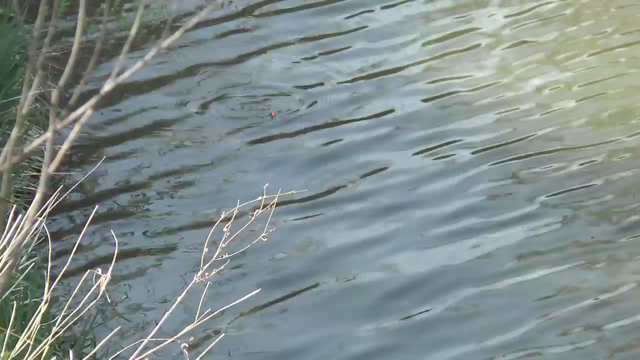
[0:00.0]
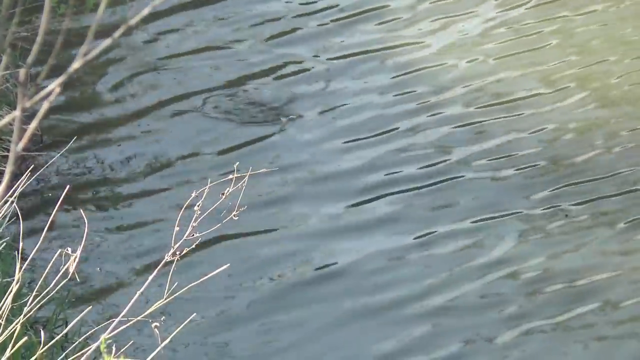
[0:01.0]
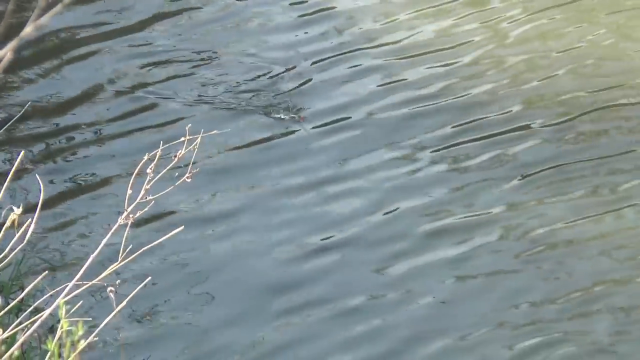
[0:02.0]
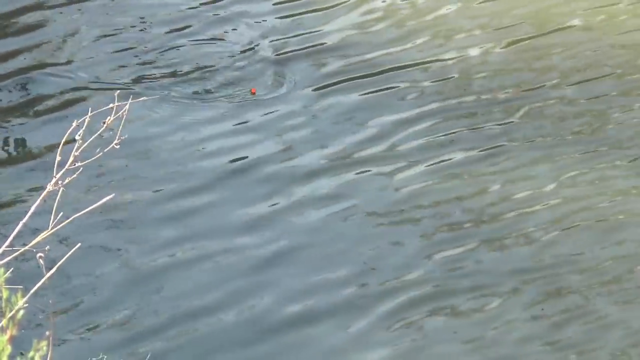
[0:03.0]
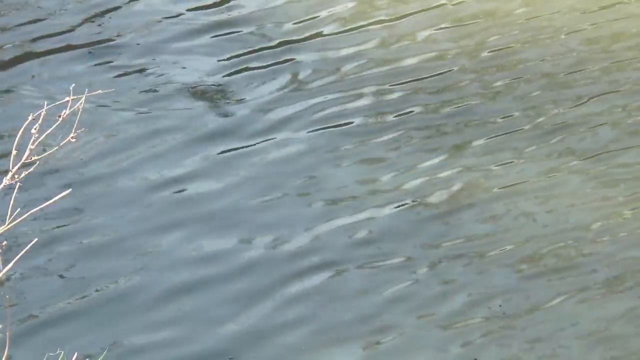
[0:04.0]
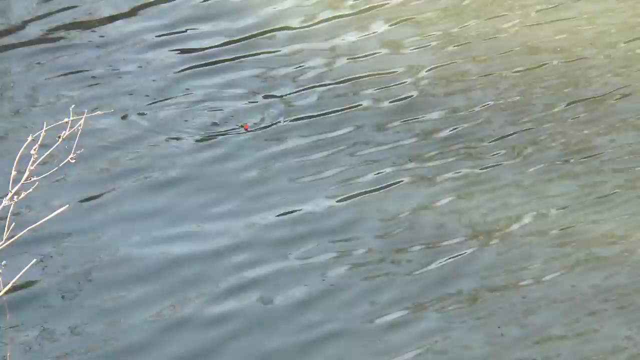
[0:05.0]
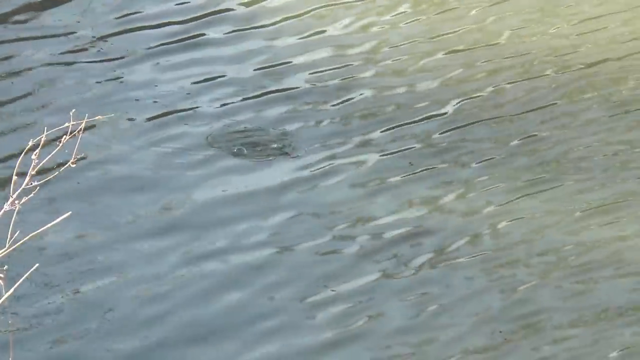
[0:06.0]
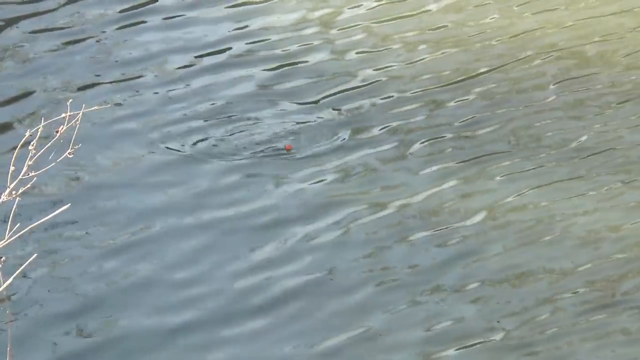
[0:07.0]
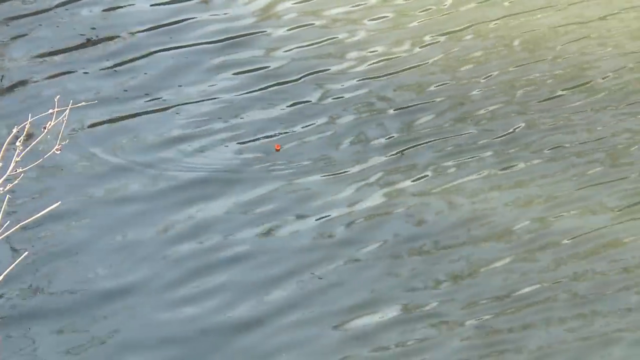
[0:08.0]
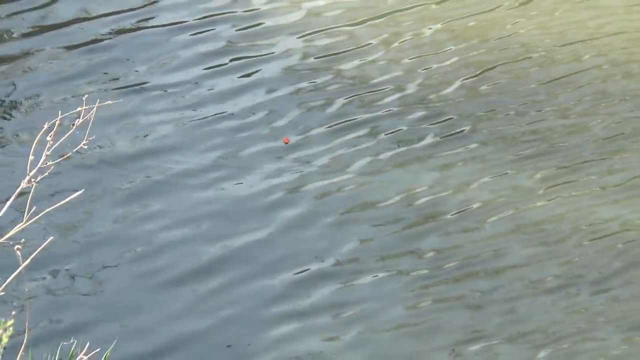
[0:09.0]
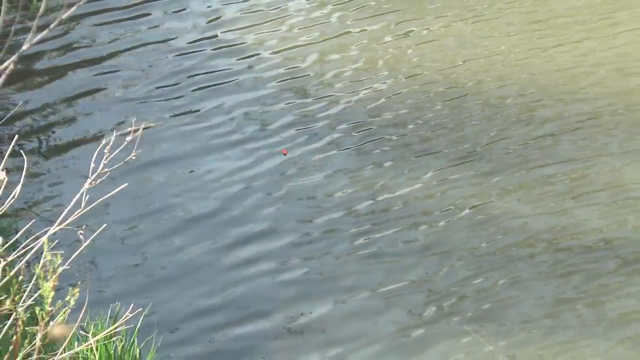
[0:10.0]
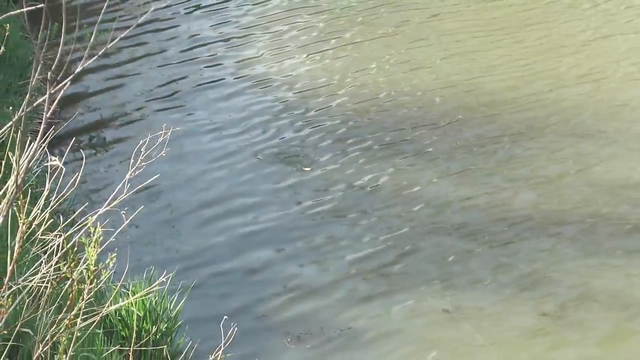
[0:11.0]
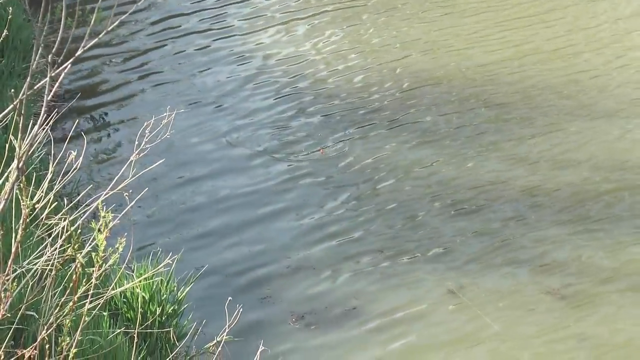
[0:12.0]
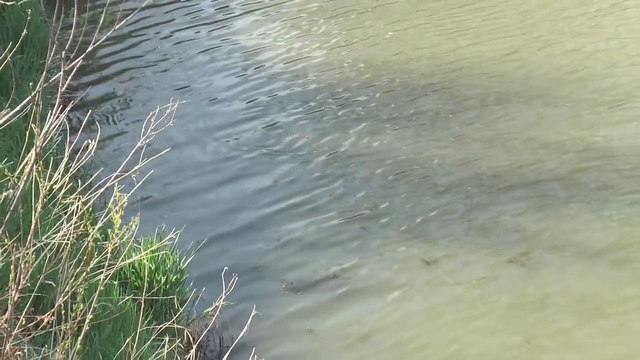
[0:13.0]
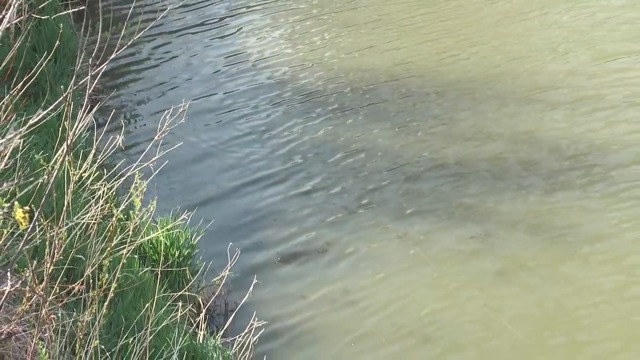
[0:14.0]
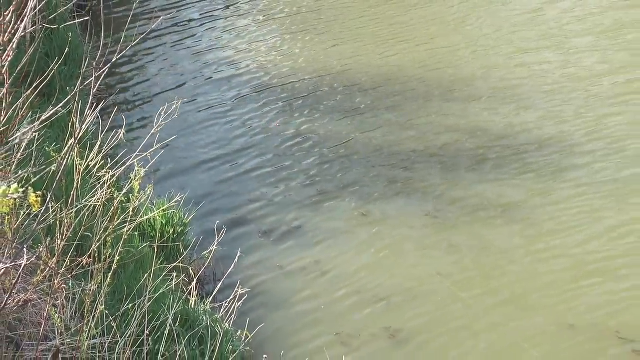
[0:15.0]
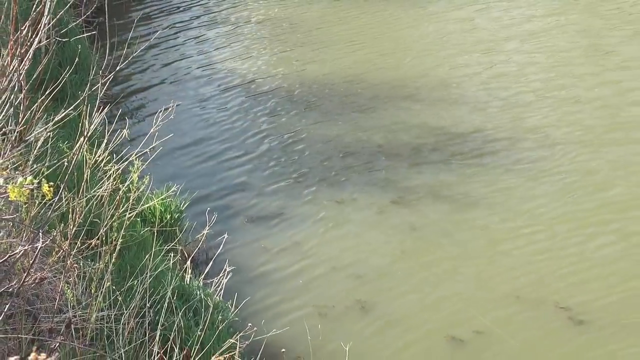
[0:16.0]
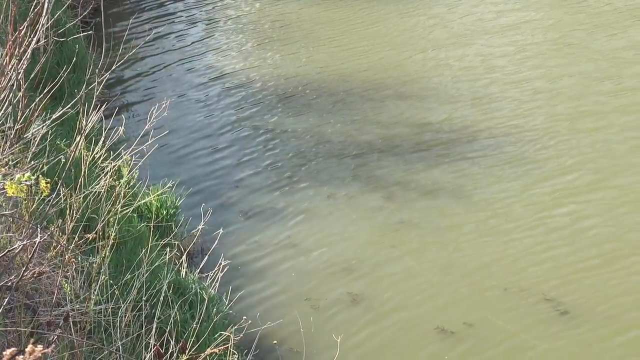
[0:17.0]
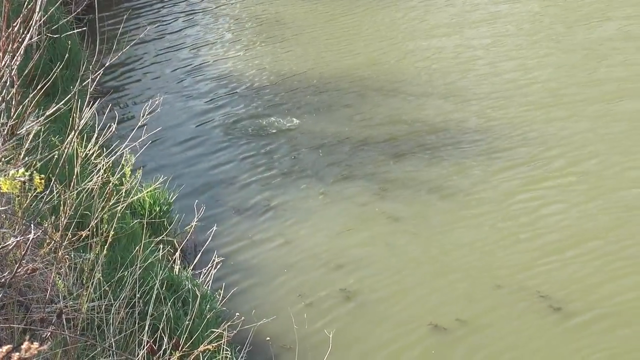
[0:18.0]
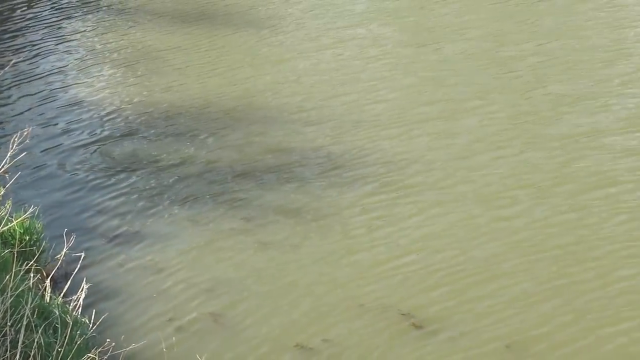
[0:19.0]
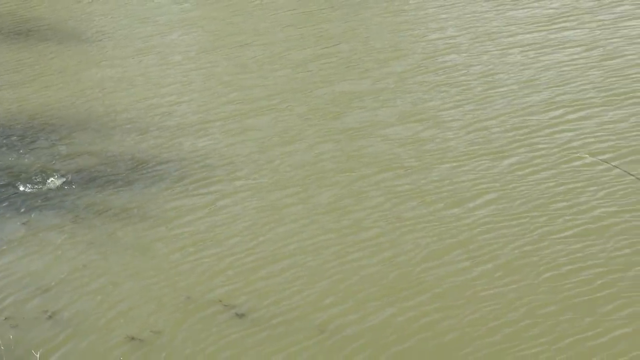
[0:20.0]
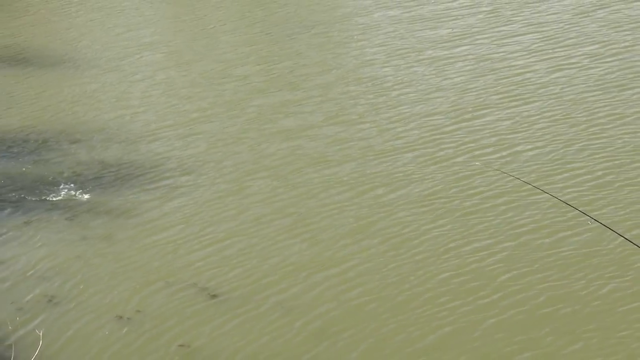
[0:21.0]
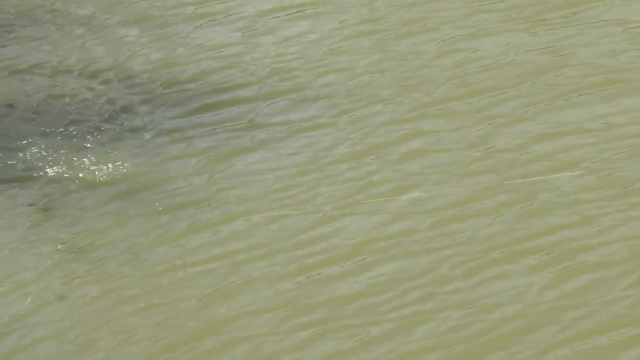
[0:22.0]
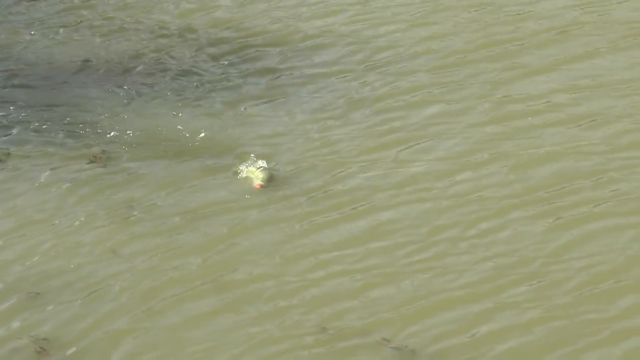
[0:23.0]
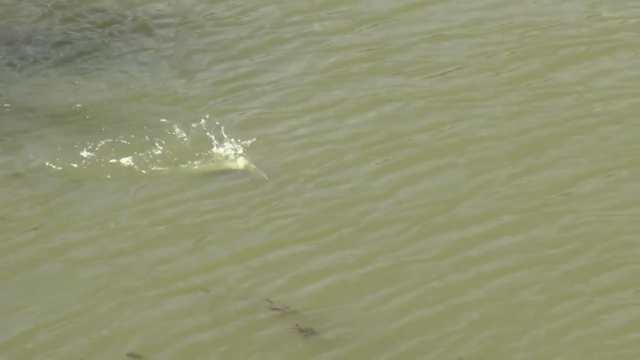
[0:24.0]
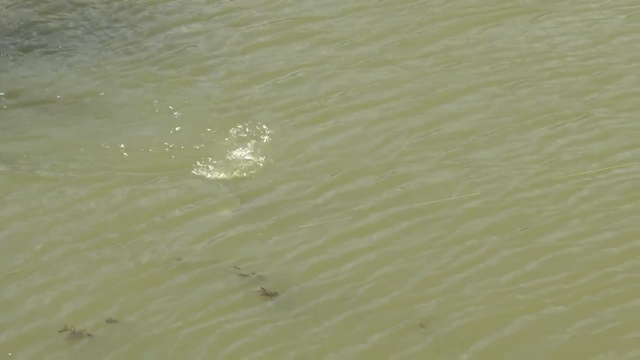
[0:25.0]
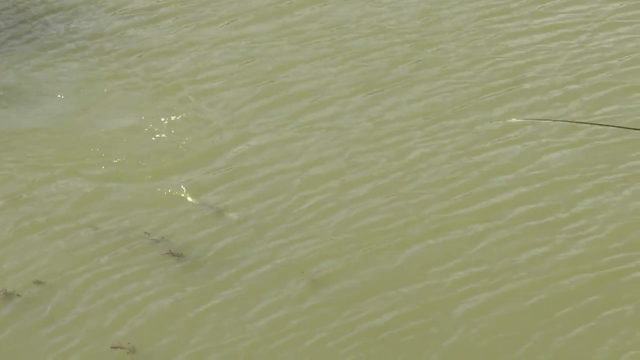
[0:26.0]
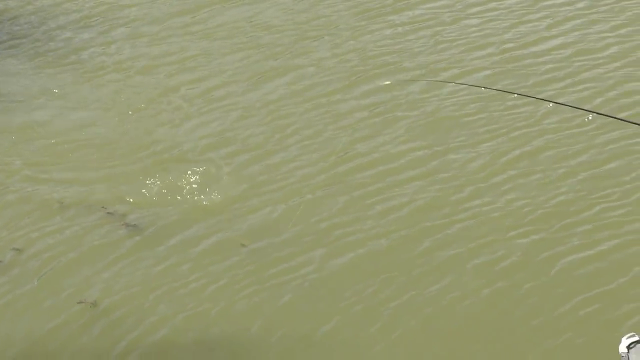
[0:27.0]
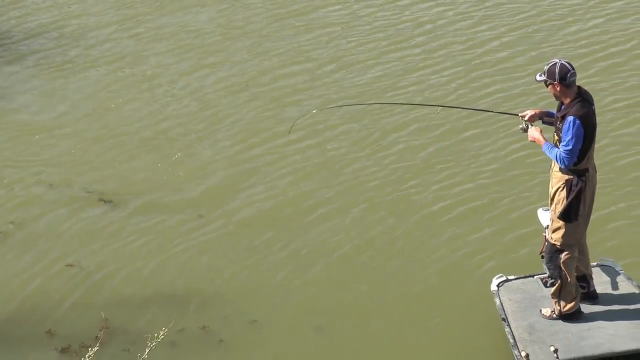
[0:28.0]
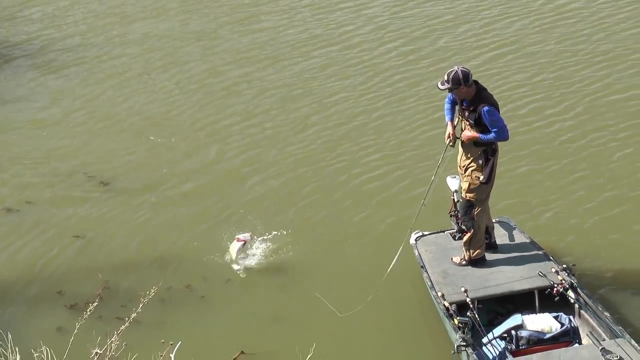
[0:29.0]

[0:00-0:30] Rippling water fills the opening view, with something under the surface. Twigs hang over the water off on the left. A little red bobble-like thing, indistinguishable at this point, moves under the water; most of it is submerged, so it could be part of a head or some kind of protrusion. It flops up and splashes, then splashes a lot, and it looks like a fish. A fishing rod comes into view, revealing that the mystery thing is a fish caught by a fisherman, on the end of a fishing line and being reeled in. On the right side of the screen a fisherman stands on what appears to be the bow of a flat john boat. He wears well-decked-out fishing pants, a black vest, a blue long-sleeve shirt under it, and a baseball cap.